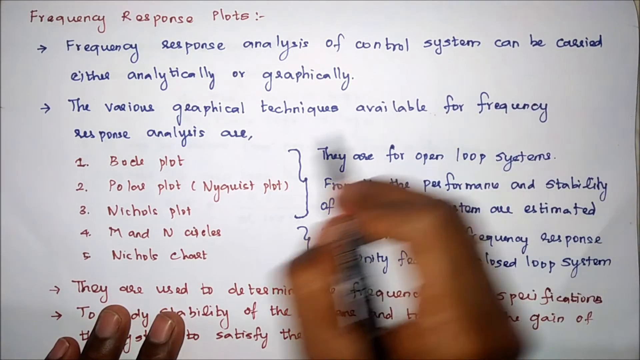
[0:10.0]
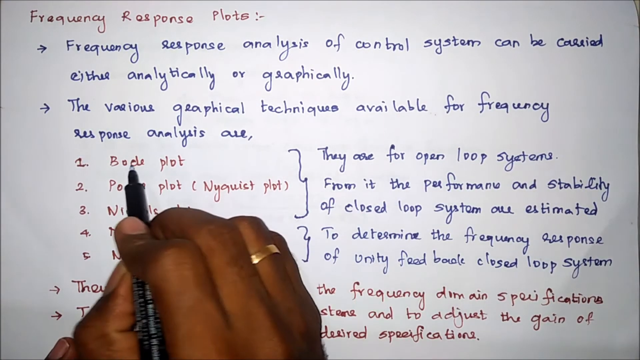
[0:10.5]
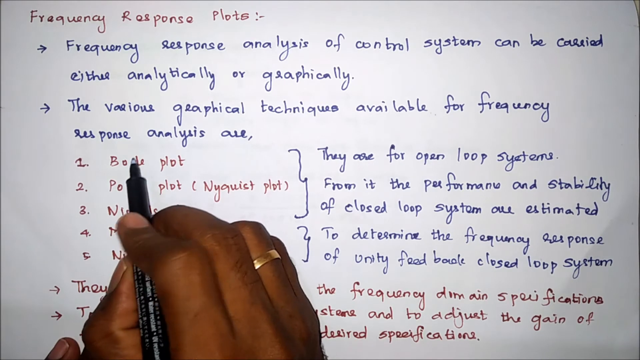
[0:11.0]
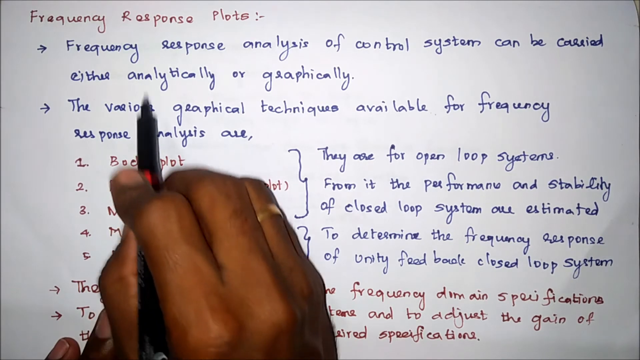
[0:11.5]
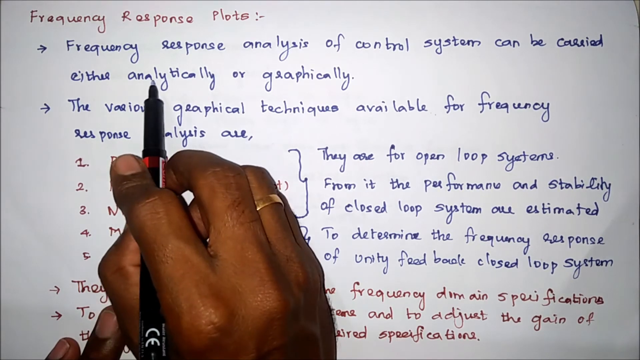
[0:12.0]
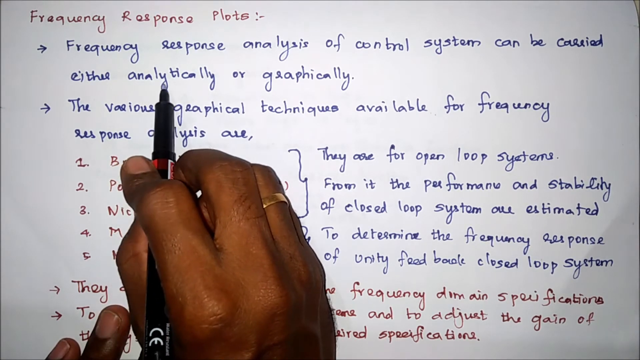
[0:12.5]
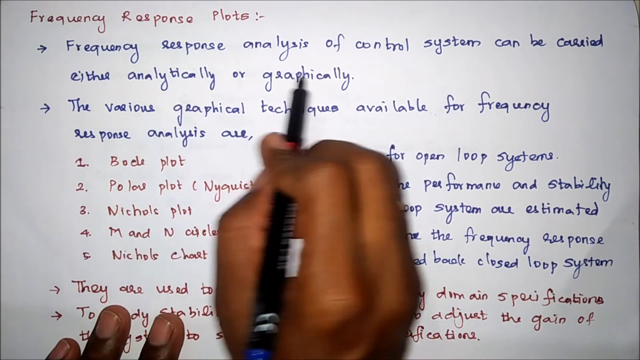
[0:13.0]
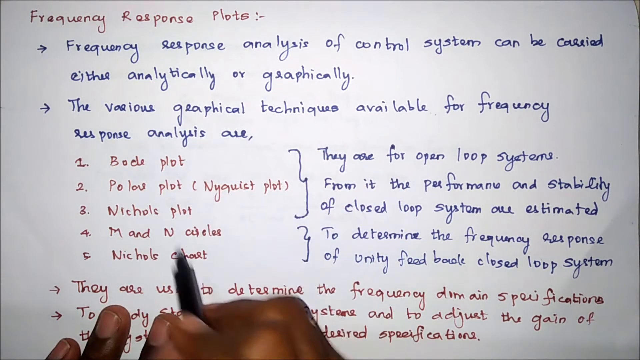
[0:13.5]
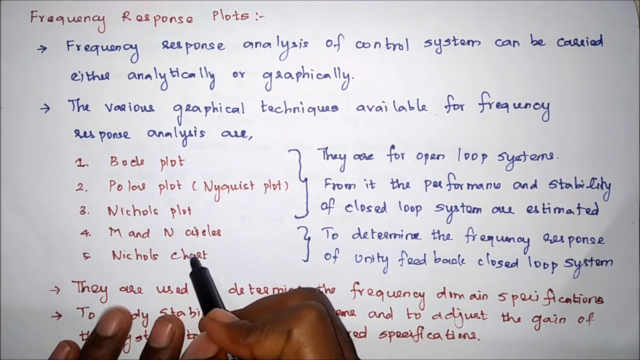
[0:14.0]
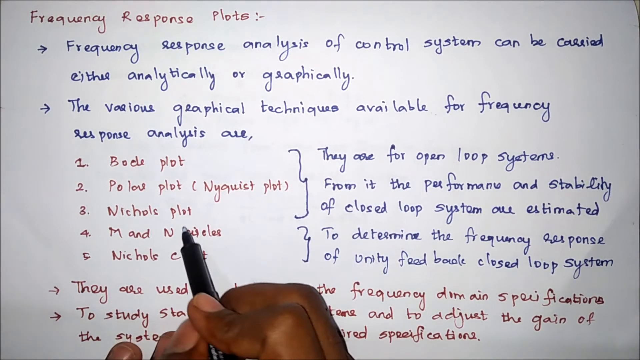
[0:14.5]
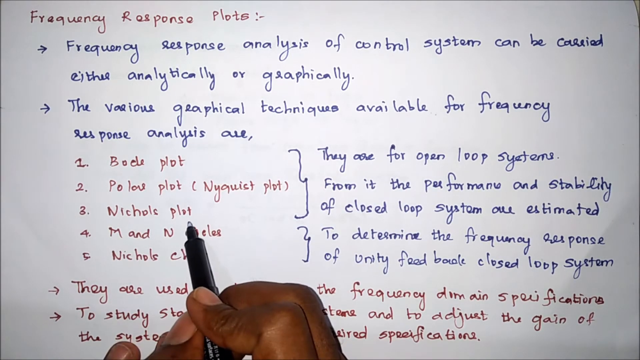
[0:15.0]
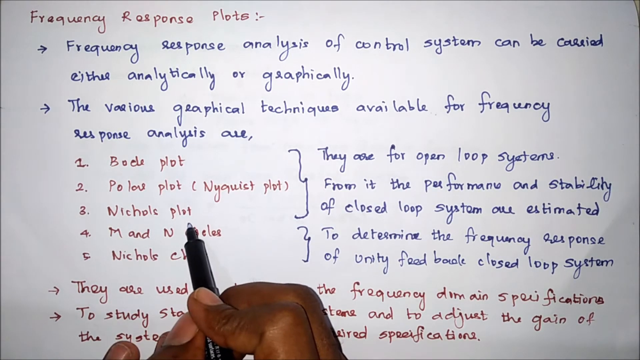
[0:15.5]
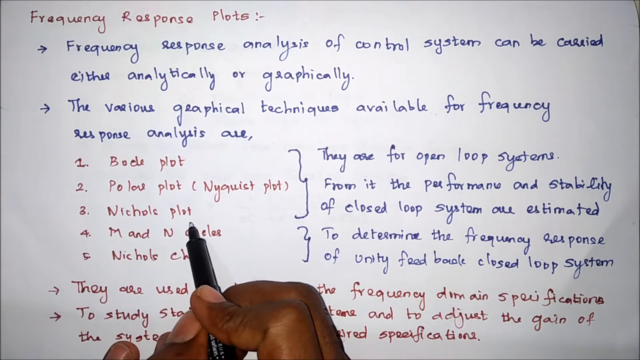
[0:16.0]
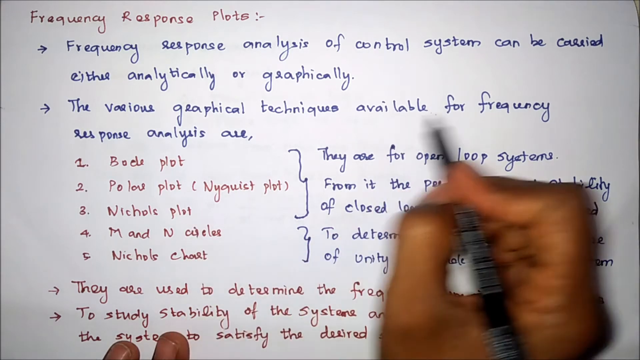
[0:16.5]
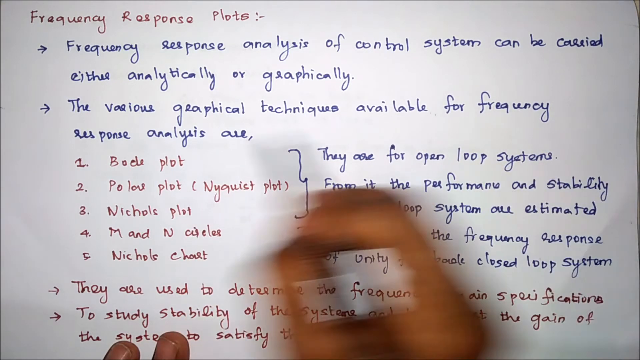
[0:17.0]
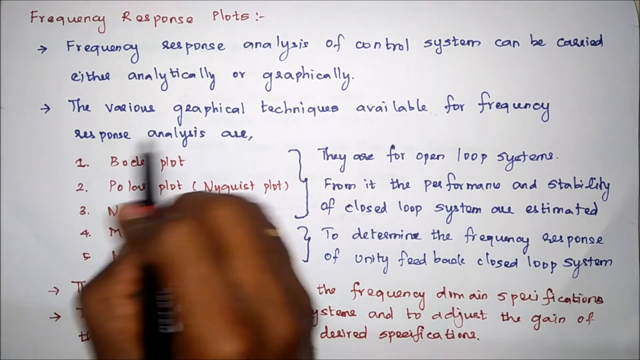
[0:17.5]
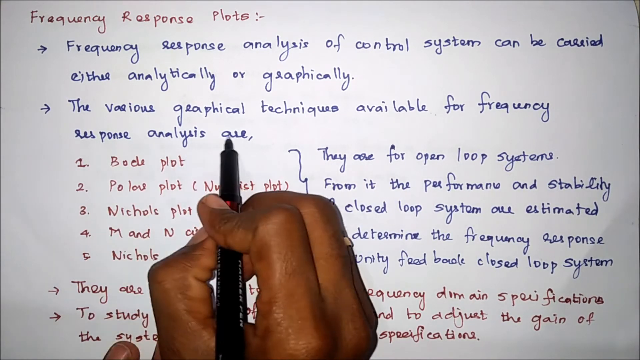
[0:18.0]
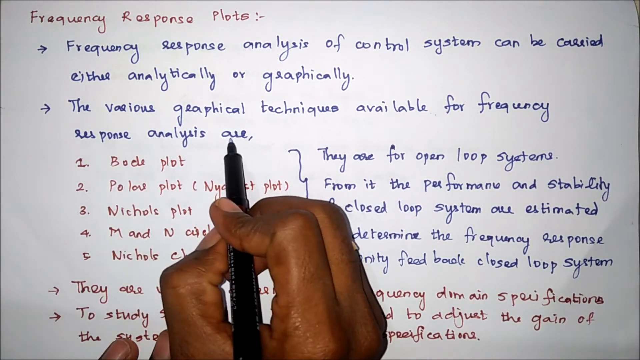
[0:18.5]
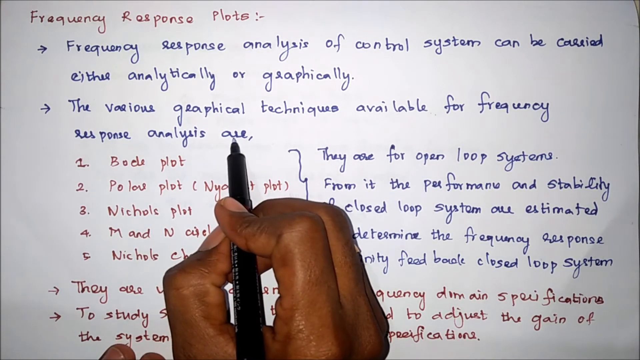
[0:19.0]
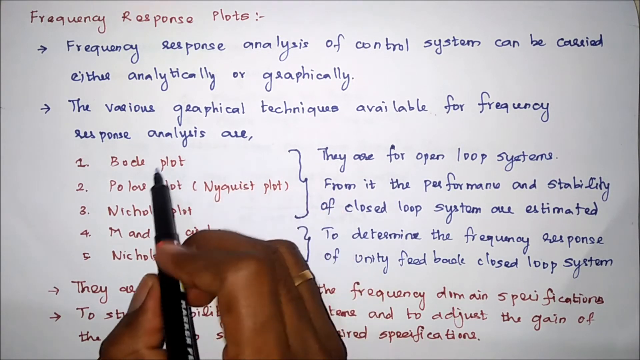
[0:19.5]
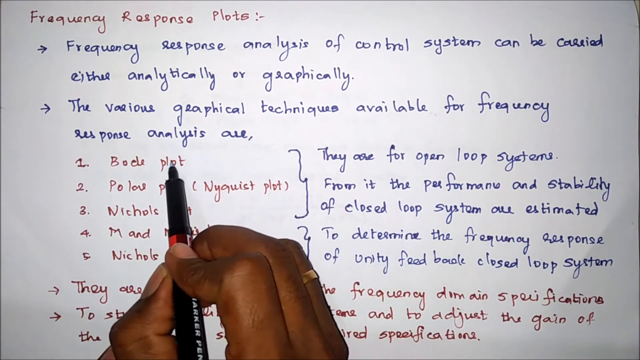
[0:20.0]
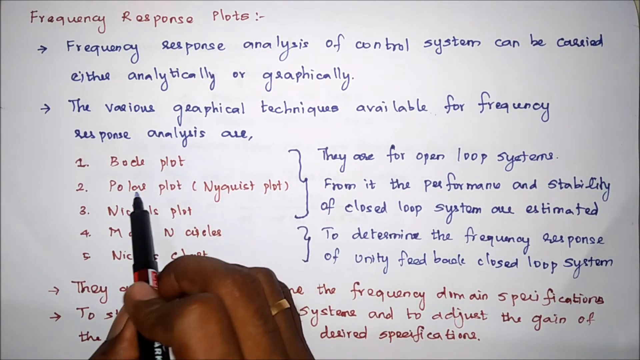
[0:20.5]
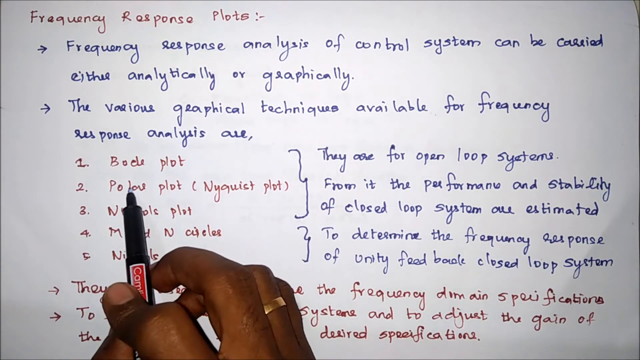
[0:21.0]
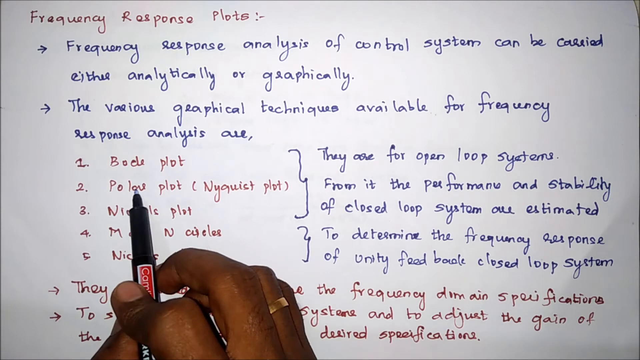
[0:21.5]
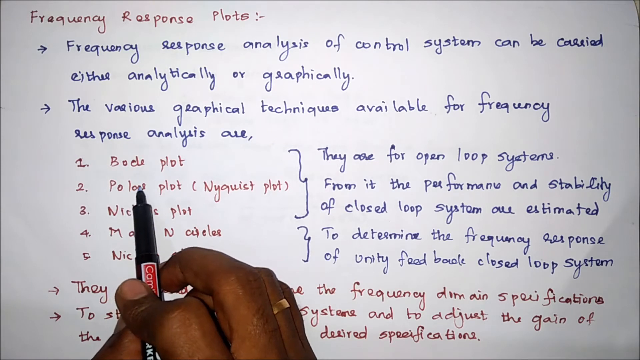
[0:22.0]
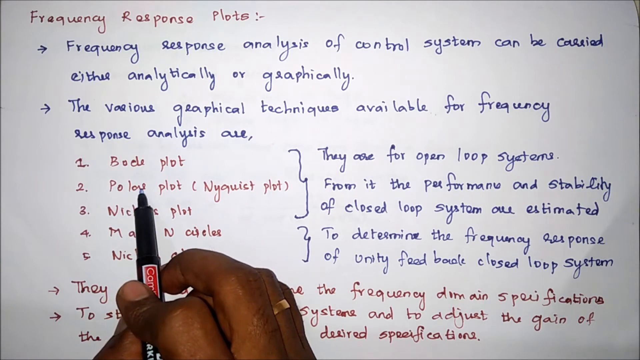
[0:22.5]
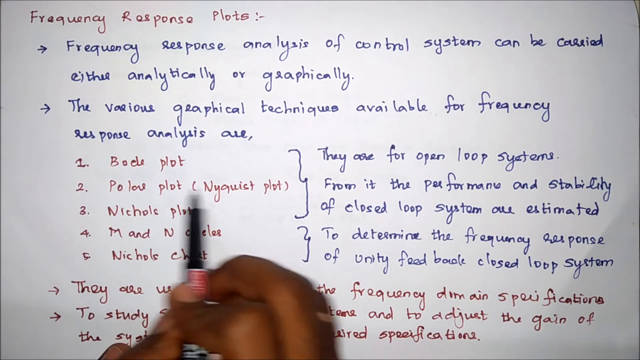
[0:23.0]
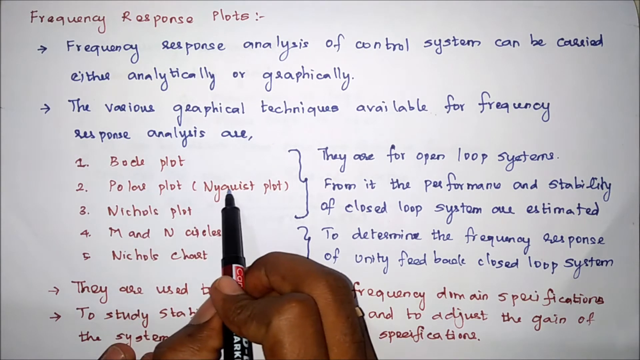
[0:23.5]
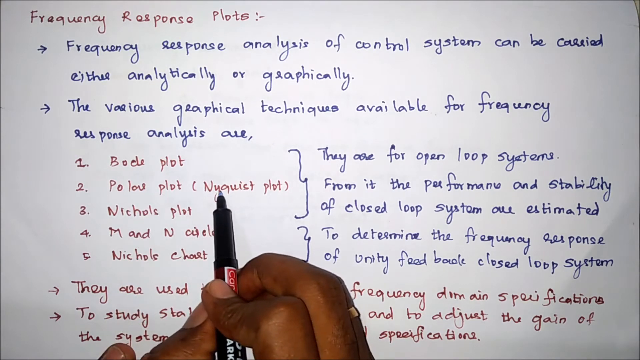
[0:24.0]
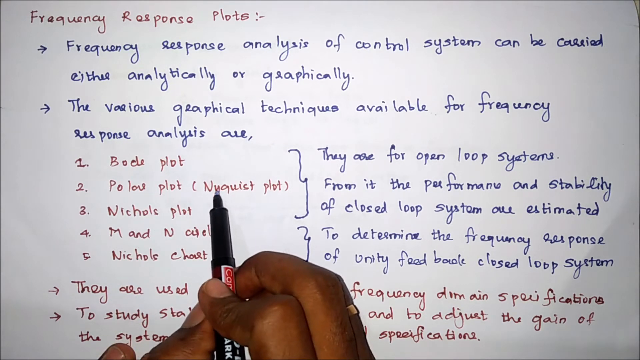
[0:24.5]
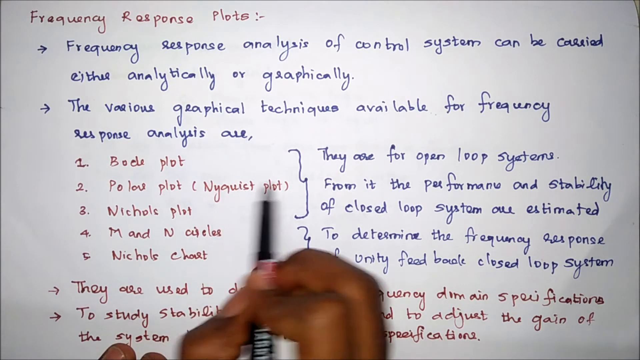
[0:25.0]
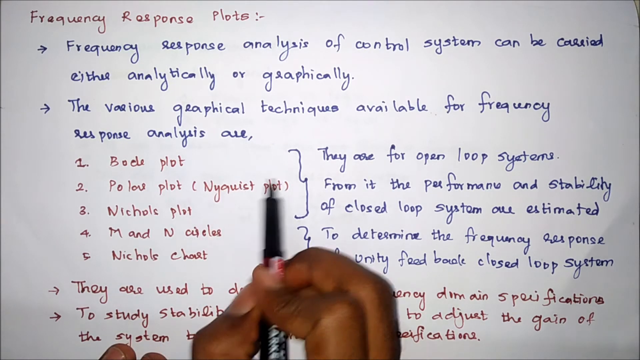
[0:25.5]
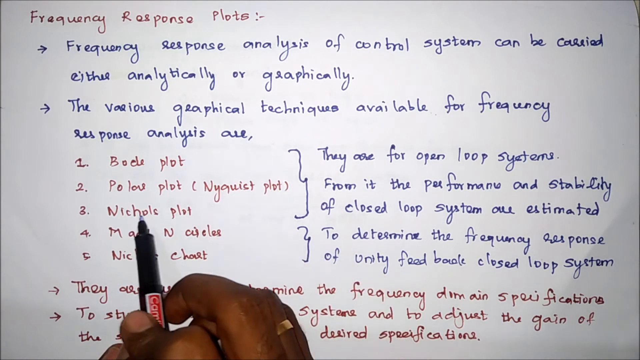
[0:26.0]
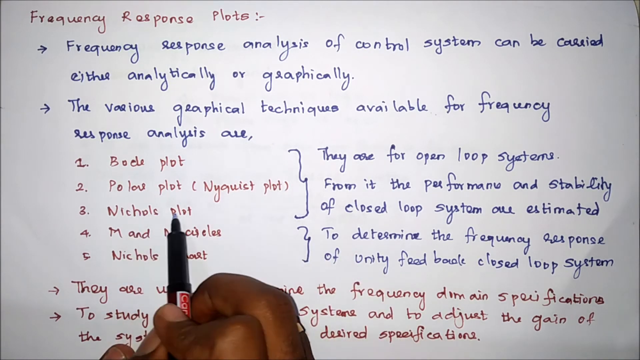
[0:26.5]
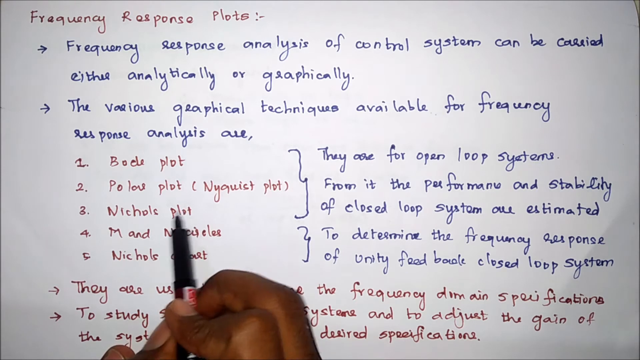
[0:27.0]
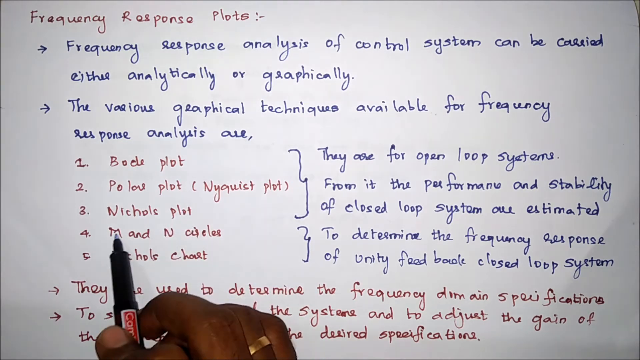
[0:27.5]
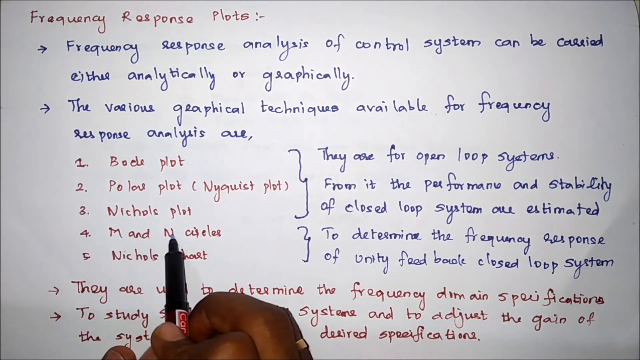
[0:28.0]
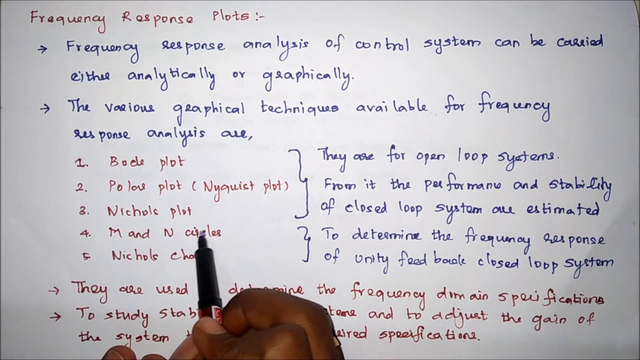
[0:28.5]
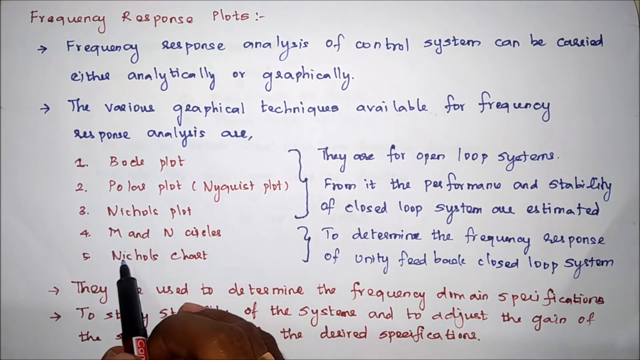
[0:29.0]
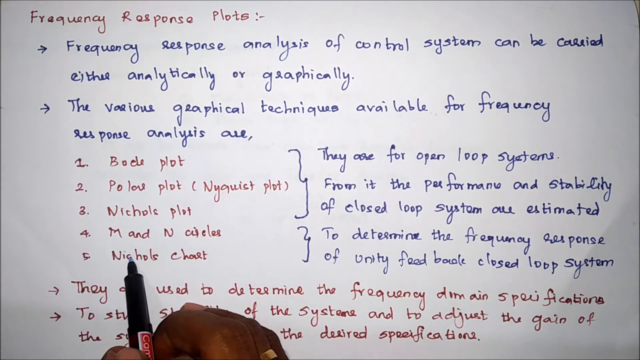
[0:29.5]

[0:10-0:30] The hand hovers over the page, where some words are written in red and others in blue ink. It hovers over the different sentences and points at different things, going line by line, showing one line and then moving to another, back and forth along each line, apparently while the person explains each item. There are no captions or subtitles.